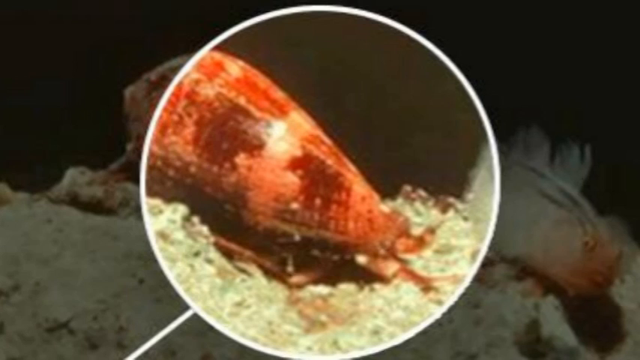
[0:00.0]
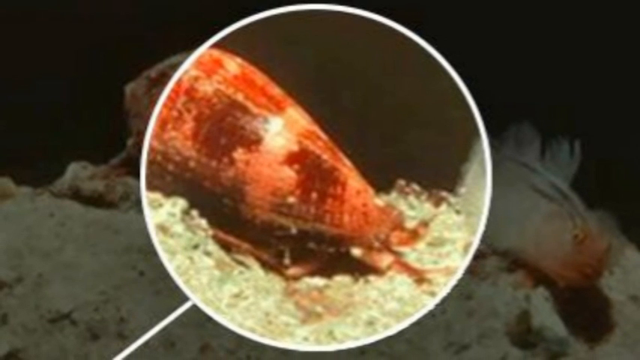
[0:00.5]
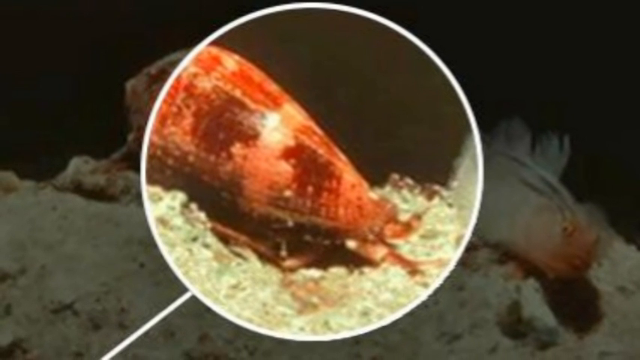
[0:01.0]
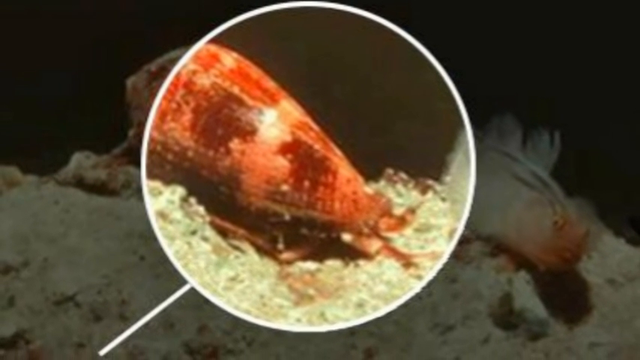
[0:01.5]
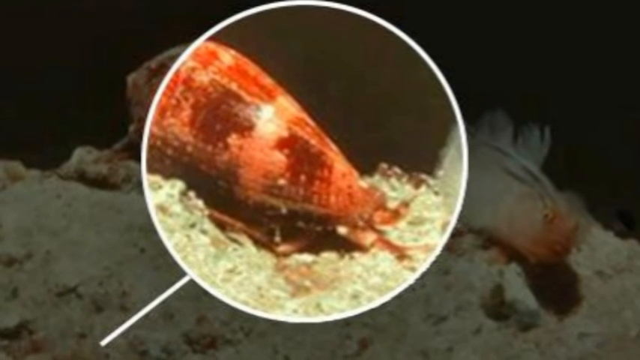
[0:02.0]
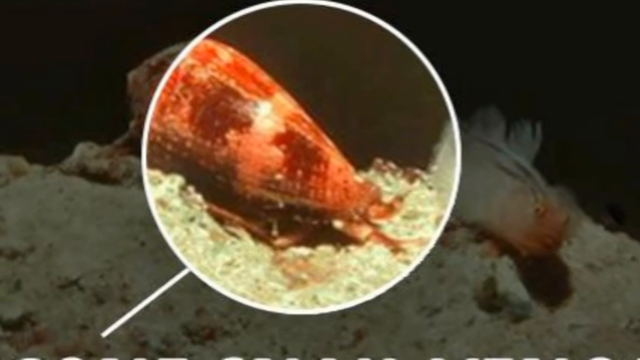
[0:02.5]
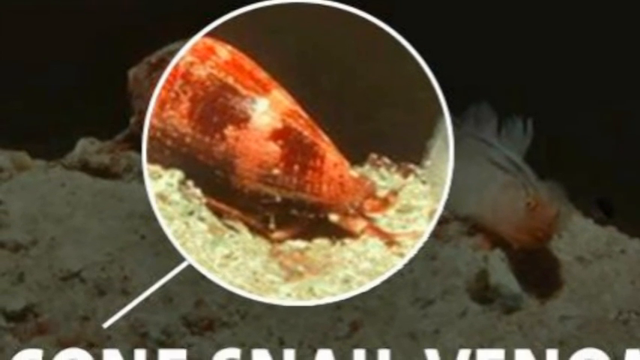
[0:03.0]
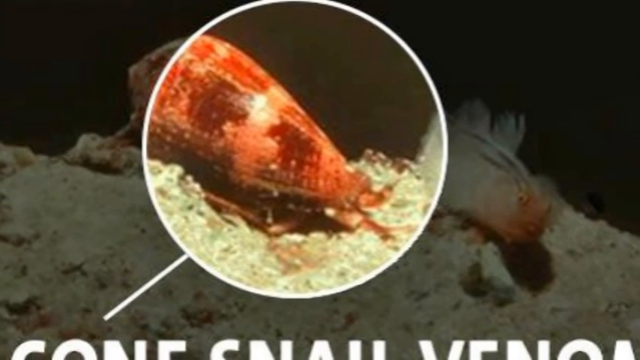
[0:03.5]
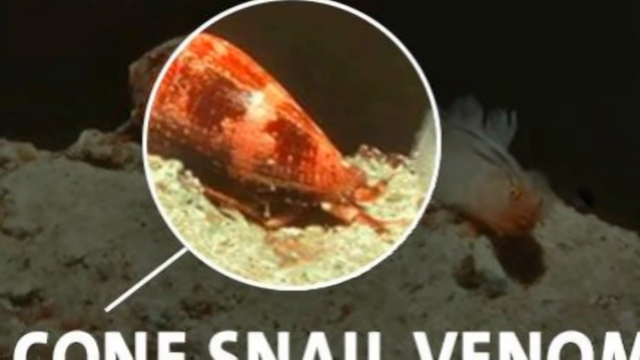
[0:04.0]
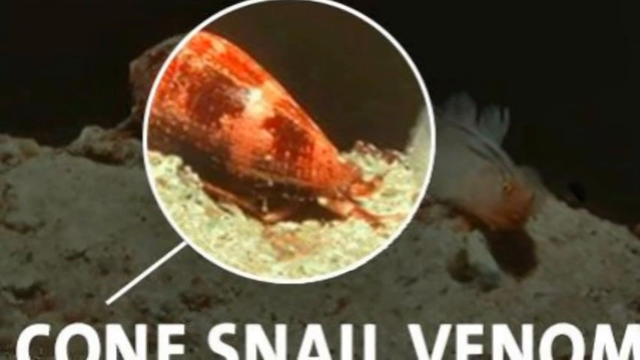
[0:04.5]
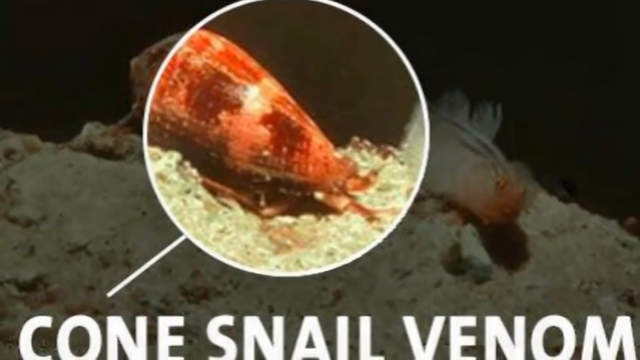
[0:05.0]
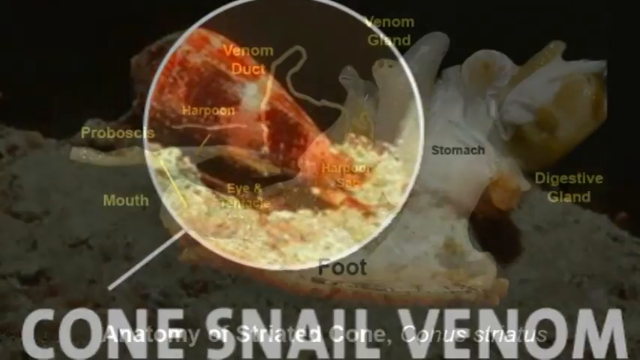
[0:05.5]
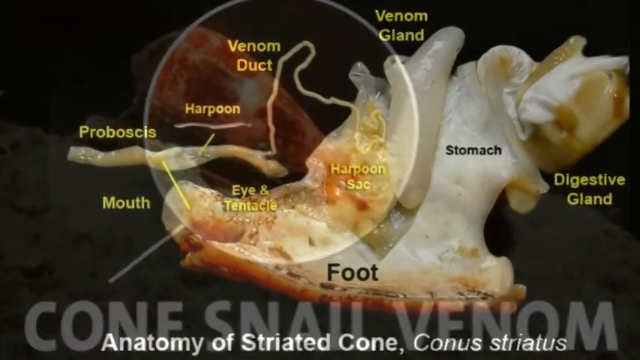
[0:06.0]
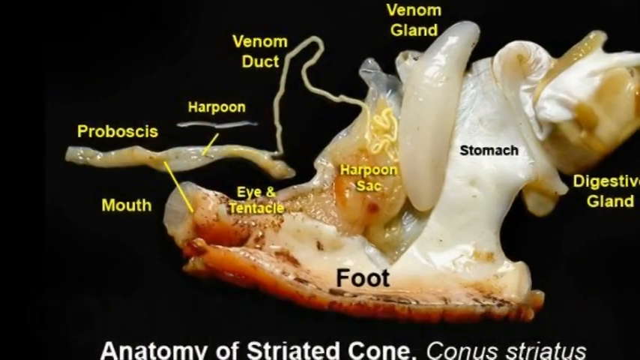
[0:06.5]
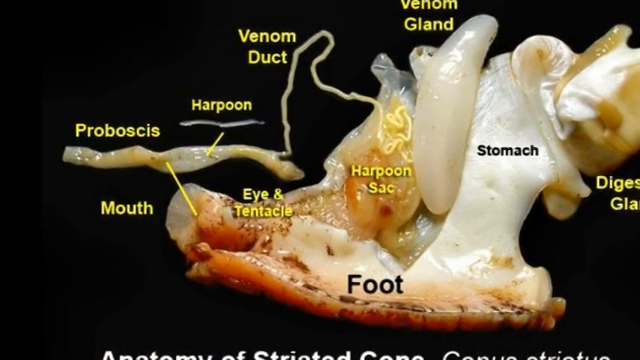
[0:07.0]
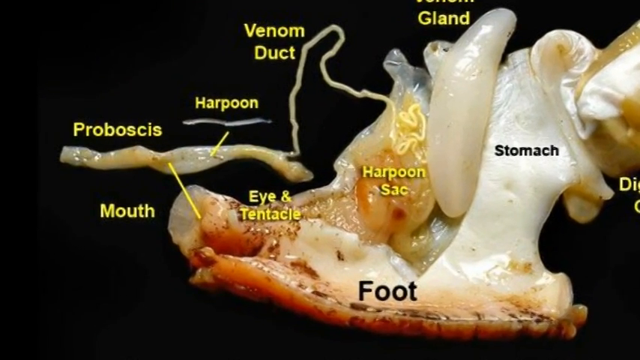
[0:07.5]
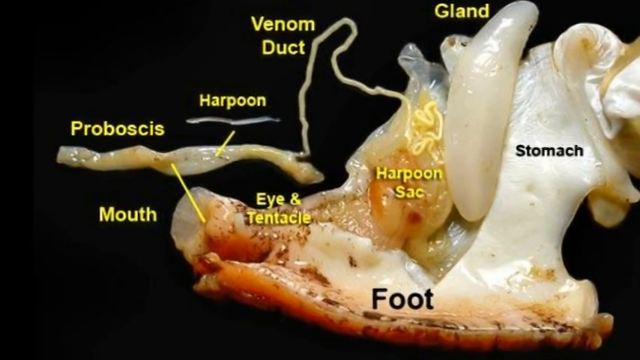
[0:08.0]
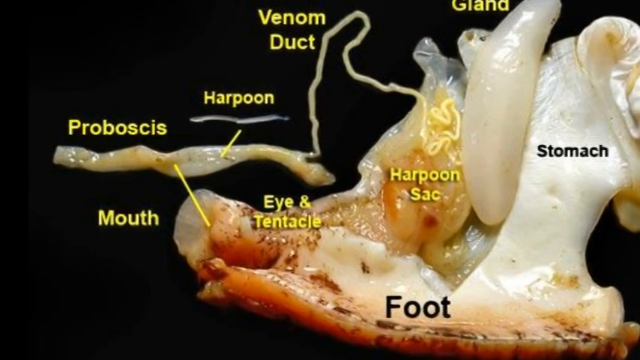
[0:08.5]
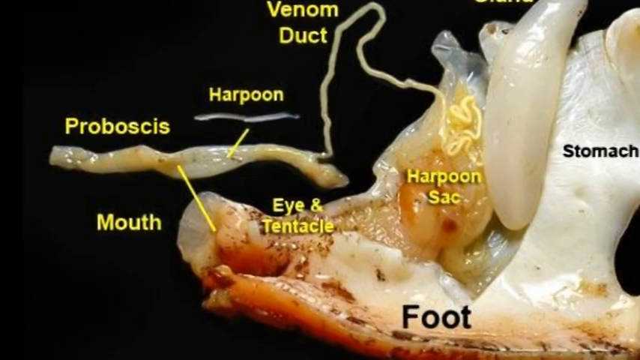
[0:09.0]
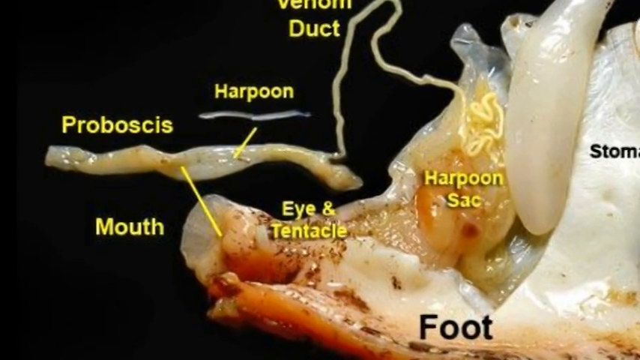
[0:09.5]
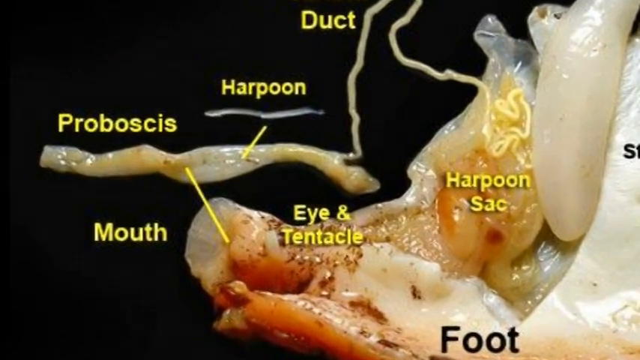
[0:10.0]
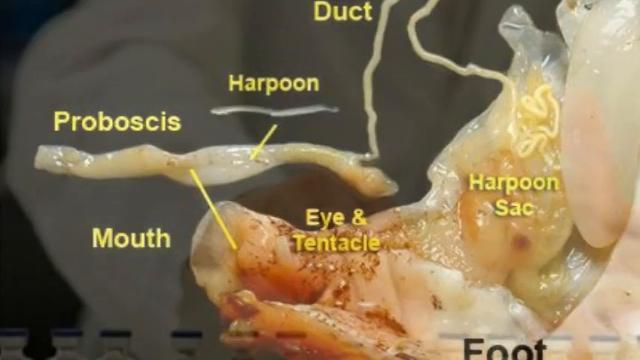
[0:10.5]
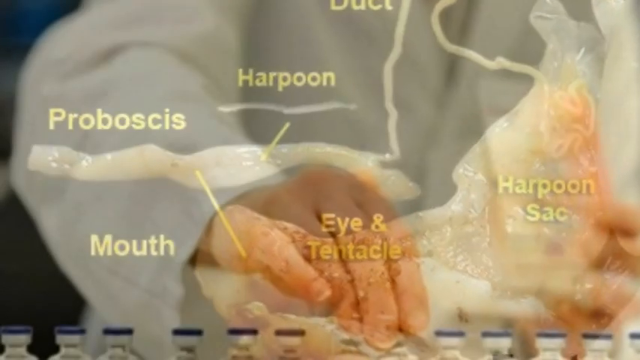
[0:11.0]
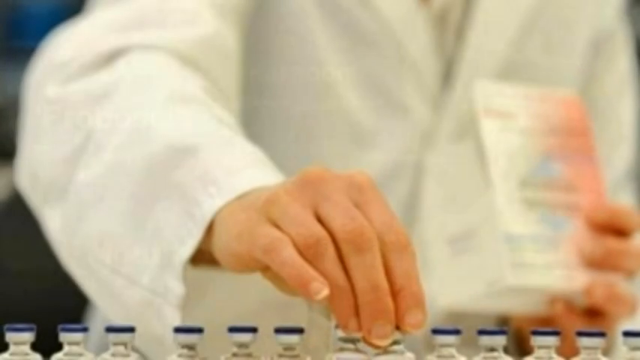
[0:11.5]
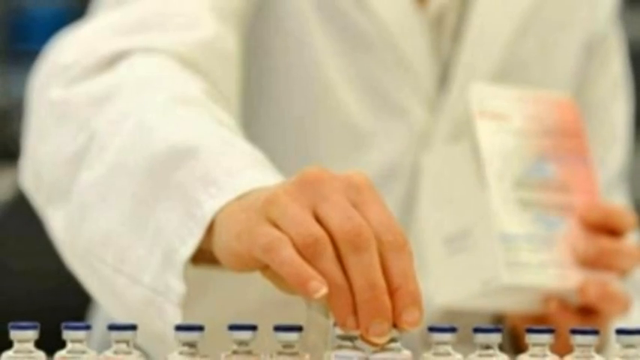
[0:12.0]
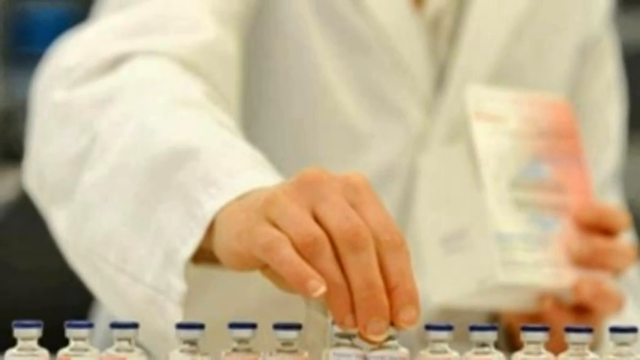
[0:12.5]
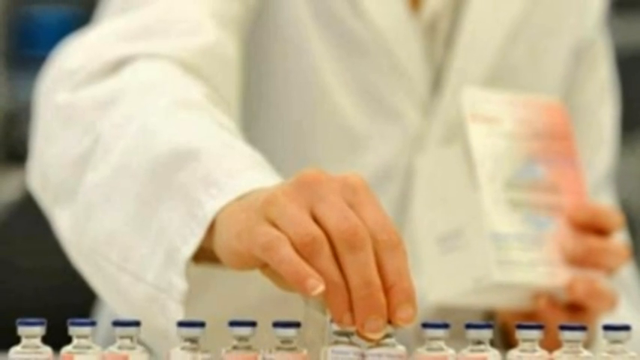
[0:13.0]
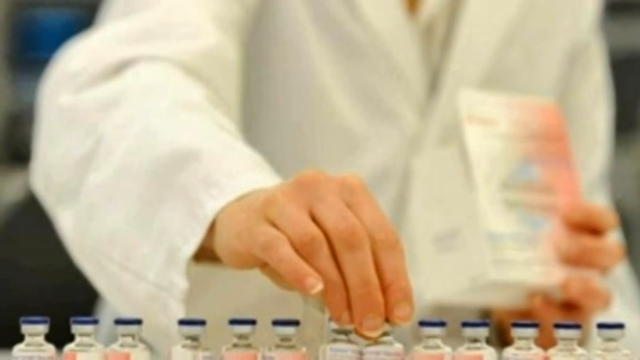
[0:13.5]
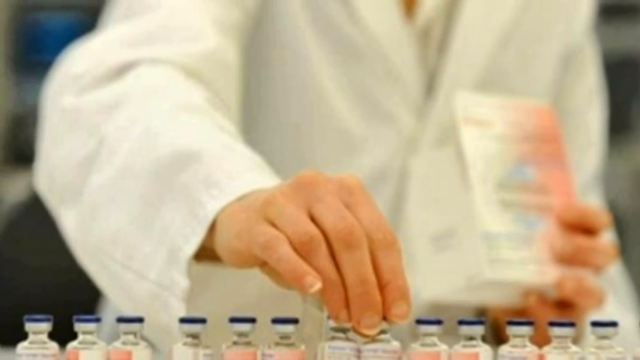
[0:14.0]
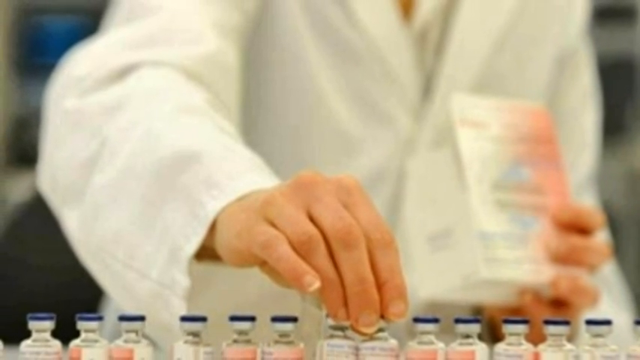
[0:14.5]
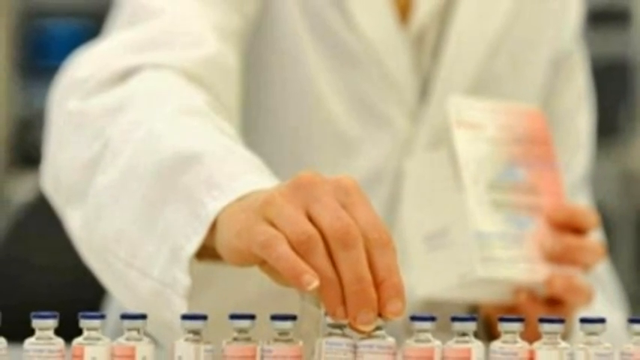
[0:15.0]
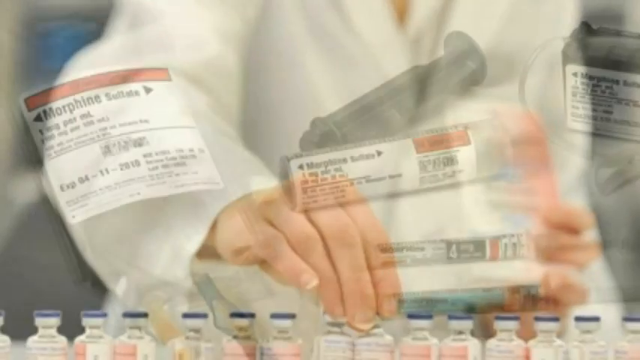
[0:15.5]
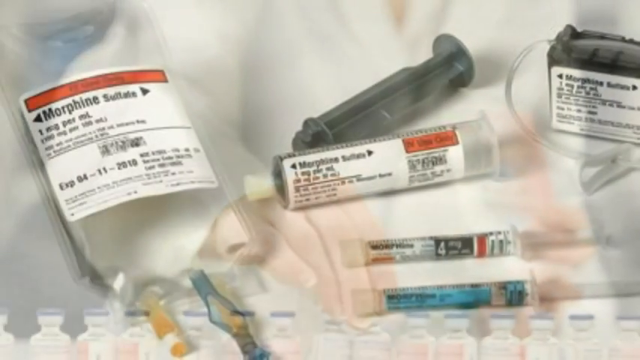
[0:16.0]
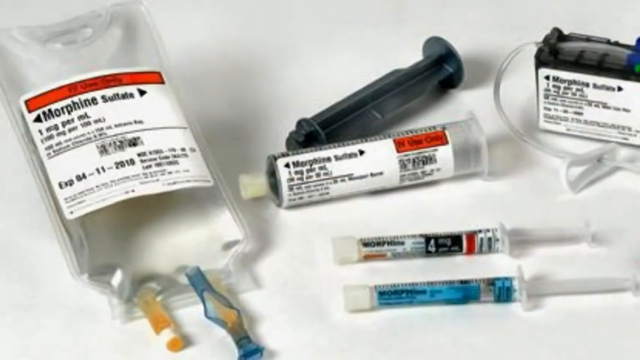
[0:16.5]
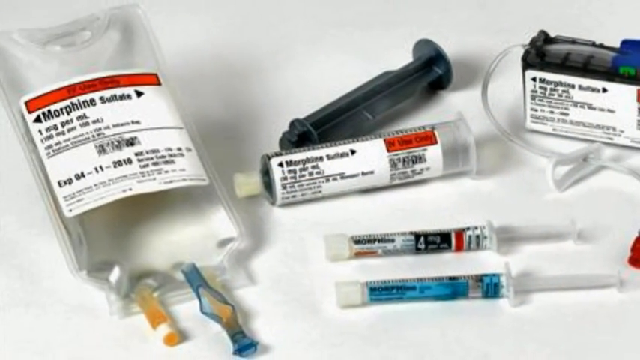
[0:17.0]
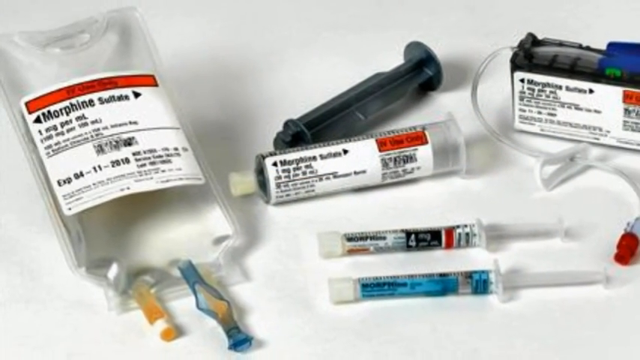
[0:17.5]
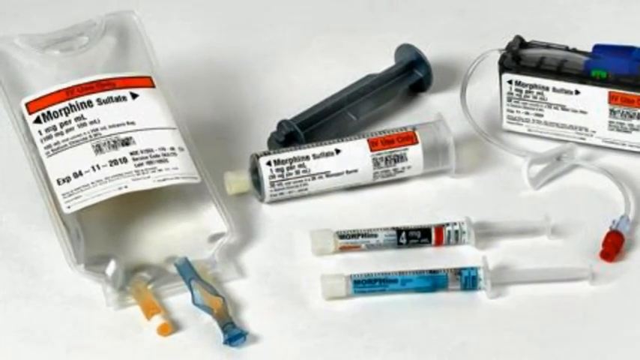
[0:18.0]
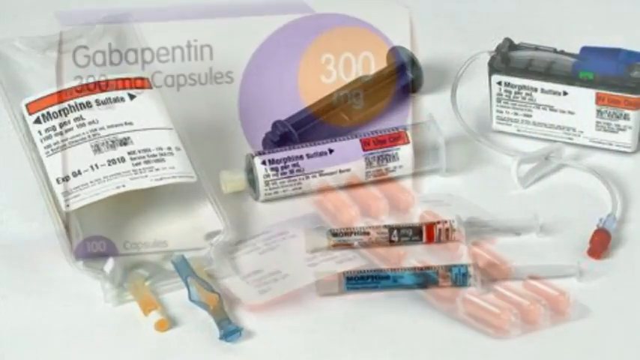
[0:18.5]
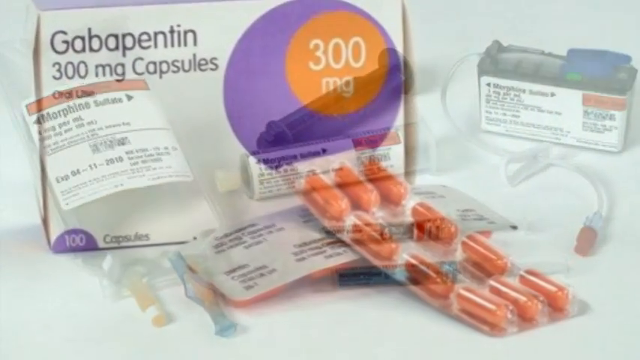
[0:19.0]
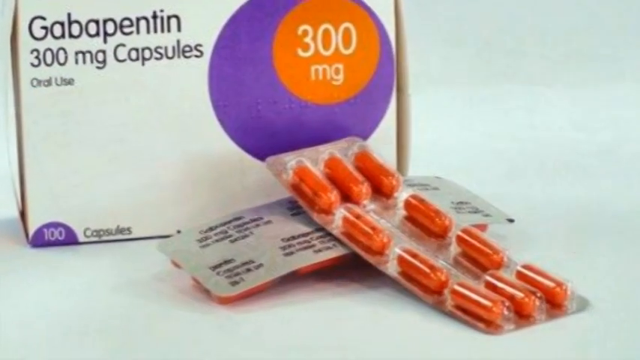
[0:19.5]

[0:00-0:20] The video opens on a picture of some type of seashell and the creature living in it as the camera zooms out, with what appears to be a graphic magnifying glass over it. It then fades to an anatomy diagram of what a snail or the creature that lives in the shell would look like, with the parts annotated in yellow or black writing: the mouth, the proboscis, the harpoon, a venom duct, a harpoon sac, a venom gland, a stomach, the foot and a digestive gland. The creature is apparently a type of snail. Next comes a hypodermic bag labeled "morphine" and another needle that is apparently for feeding an IV, along with needles or tools to administer the dose into an IV line. Then a pharmaceutical box of gabapentin 300 milligram capsules appears; the capsules are bright orange and sit in bubble-like containers.